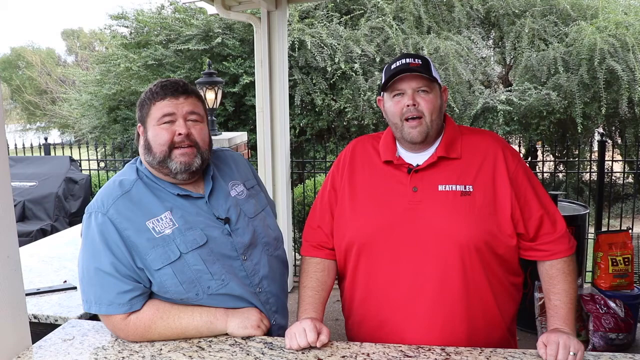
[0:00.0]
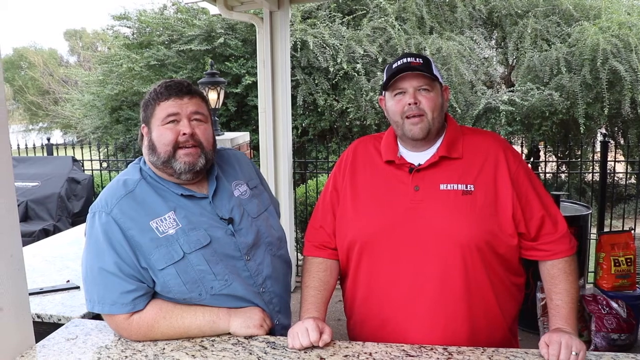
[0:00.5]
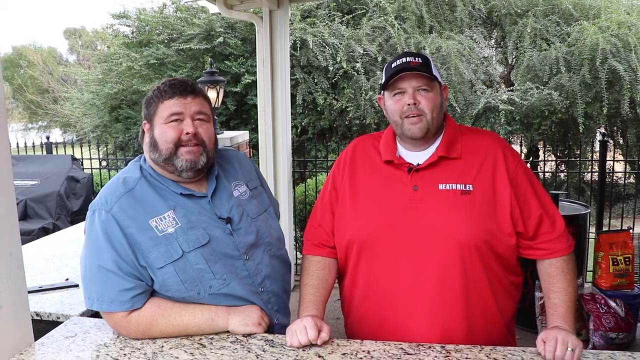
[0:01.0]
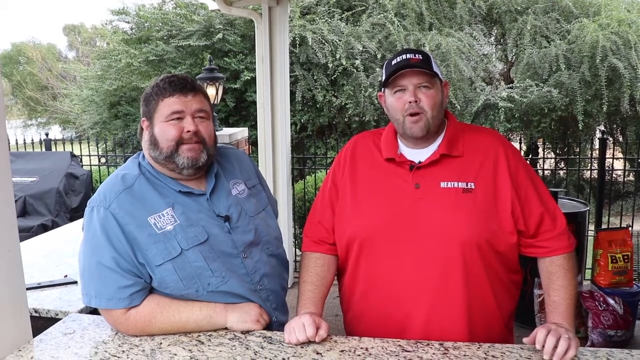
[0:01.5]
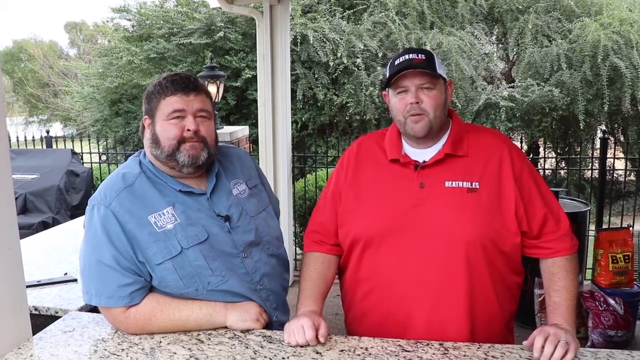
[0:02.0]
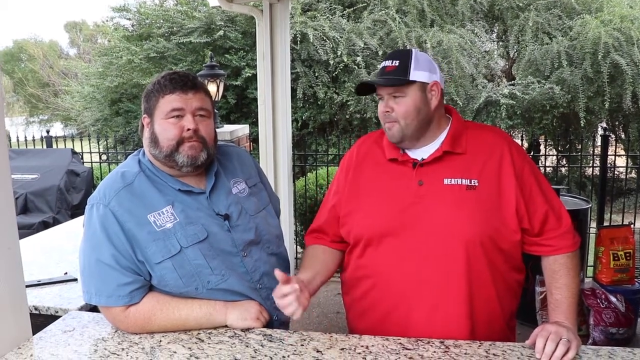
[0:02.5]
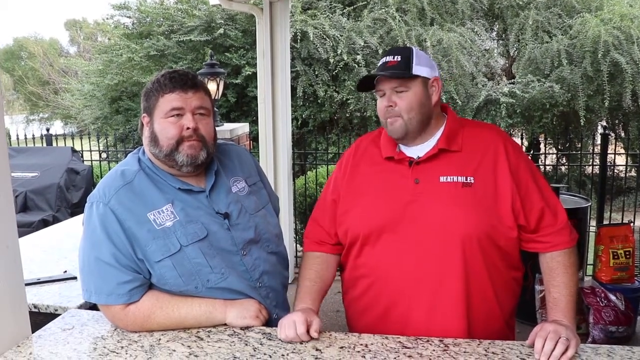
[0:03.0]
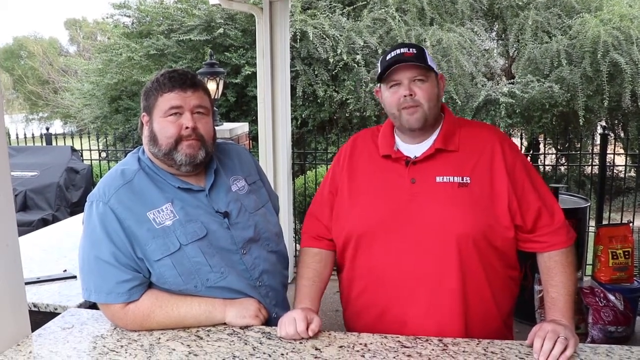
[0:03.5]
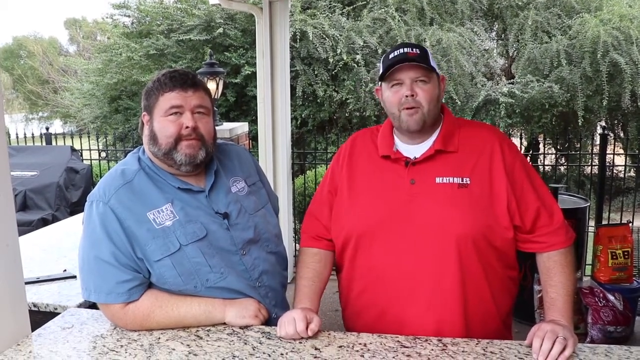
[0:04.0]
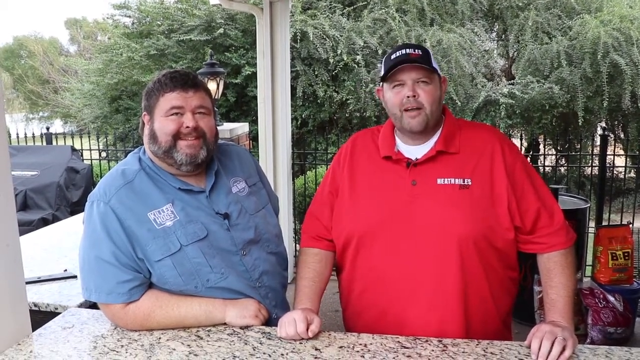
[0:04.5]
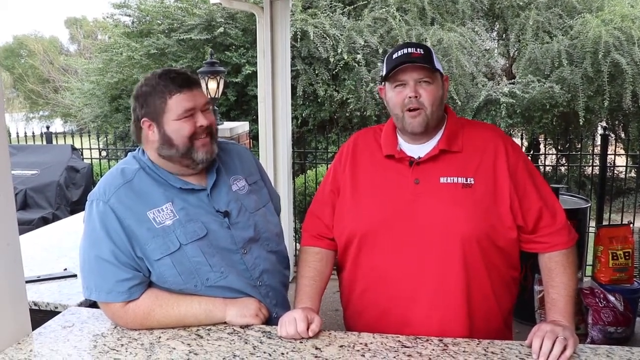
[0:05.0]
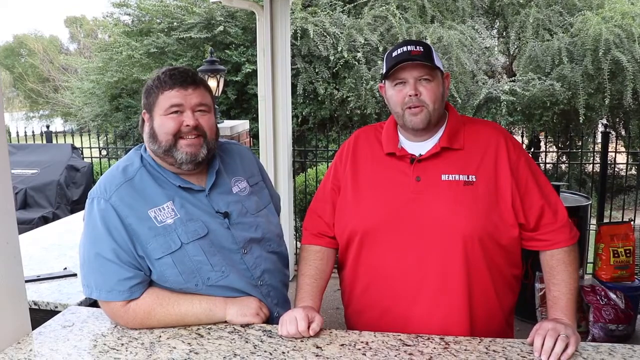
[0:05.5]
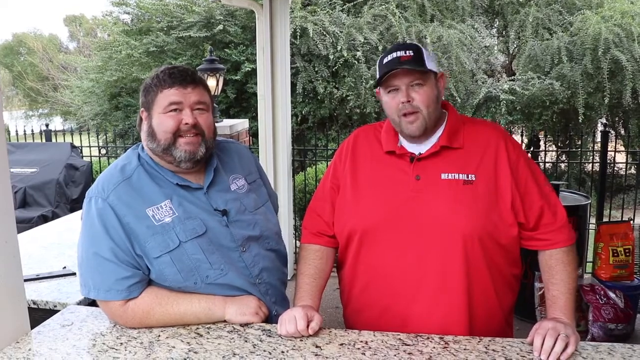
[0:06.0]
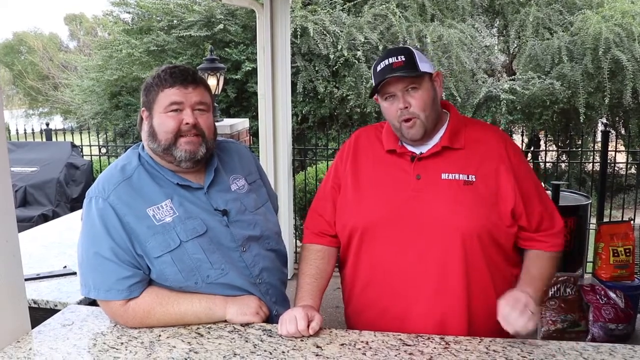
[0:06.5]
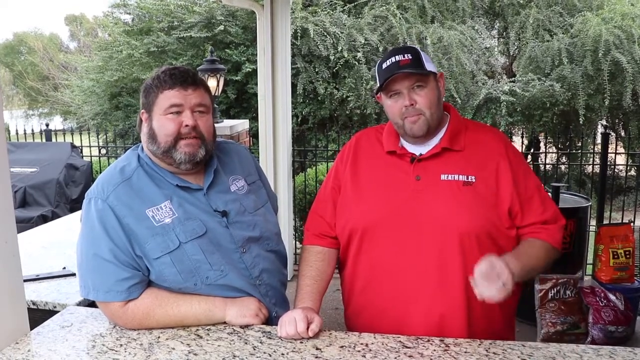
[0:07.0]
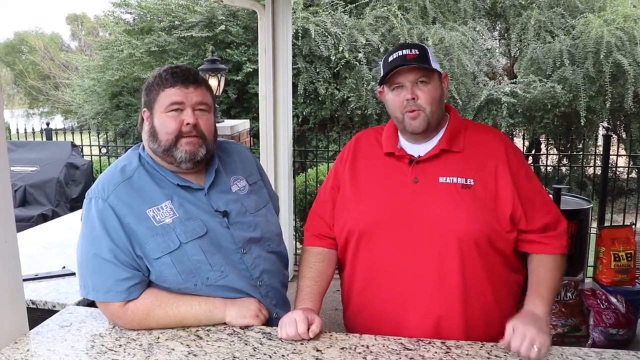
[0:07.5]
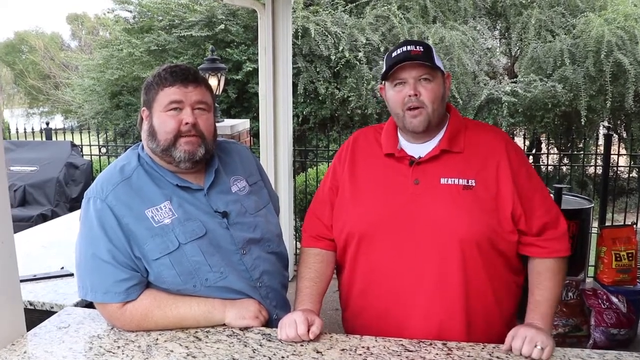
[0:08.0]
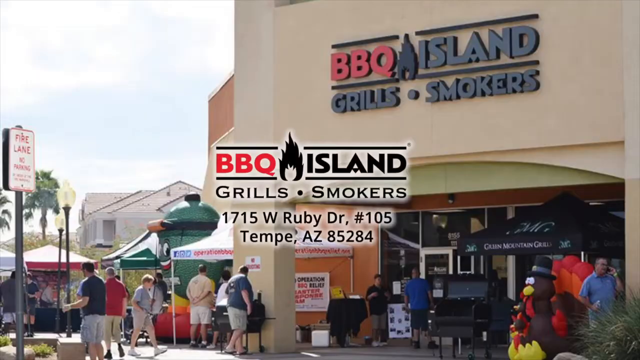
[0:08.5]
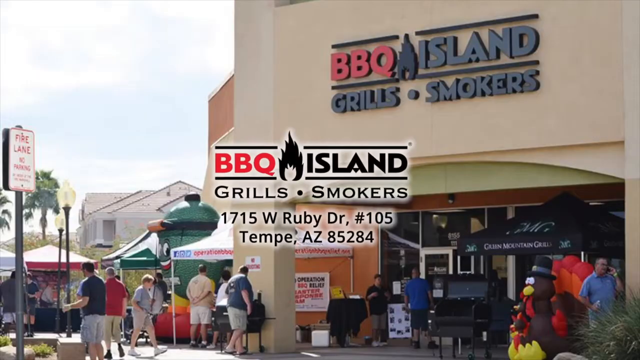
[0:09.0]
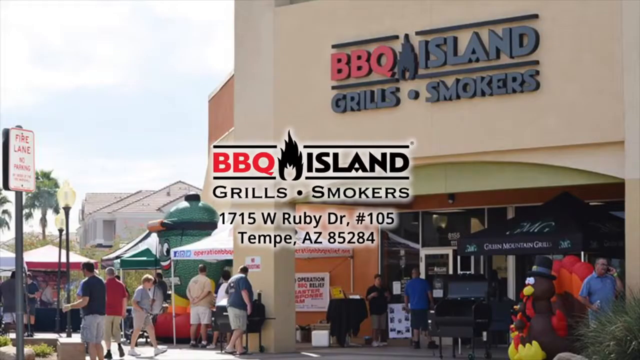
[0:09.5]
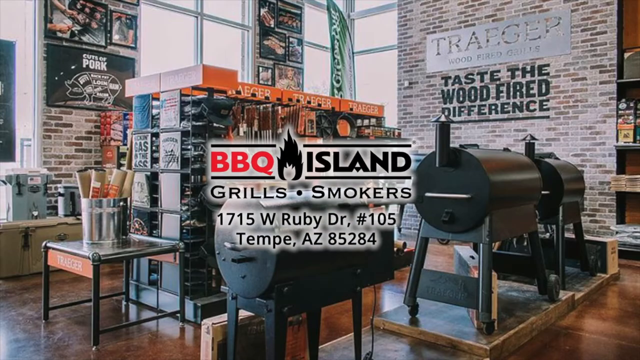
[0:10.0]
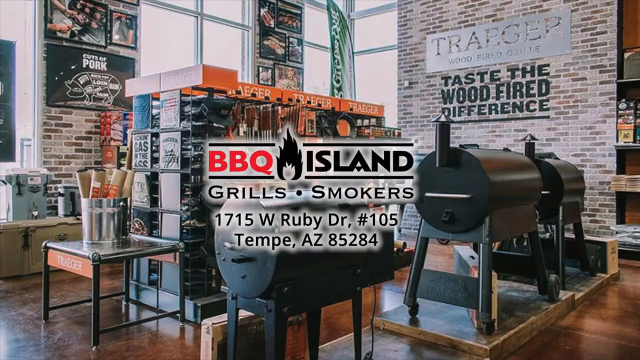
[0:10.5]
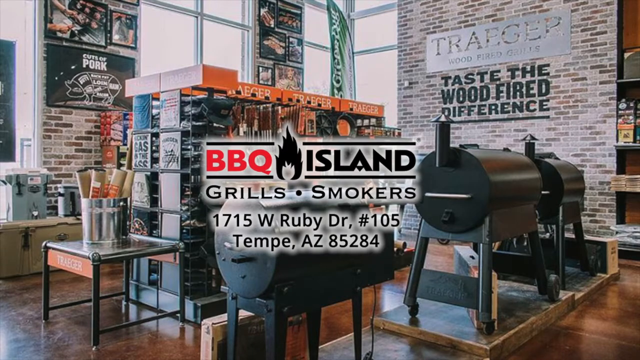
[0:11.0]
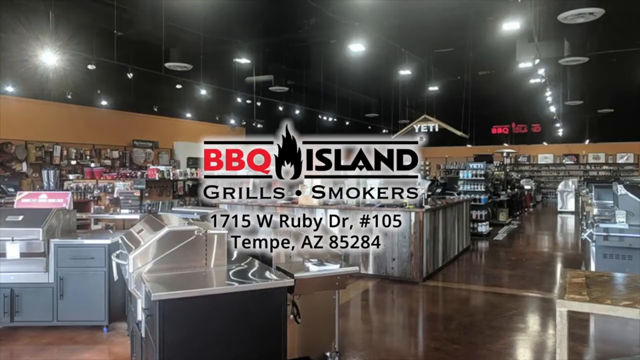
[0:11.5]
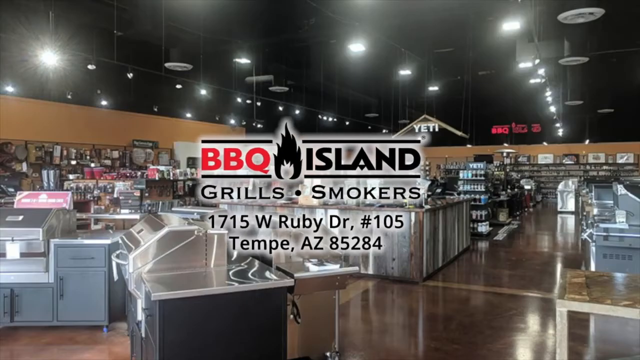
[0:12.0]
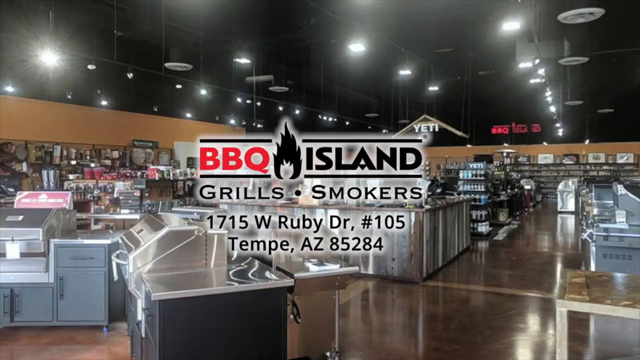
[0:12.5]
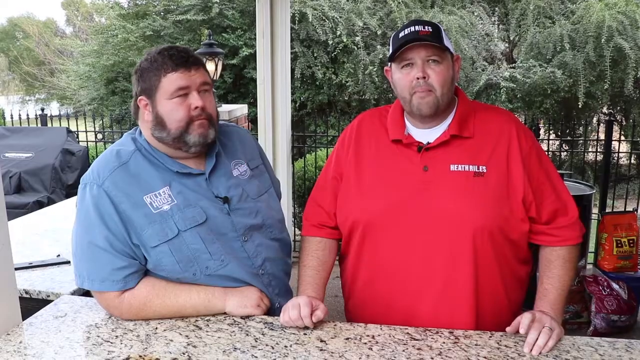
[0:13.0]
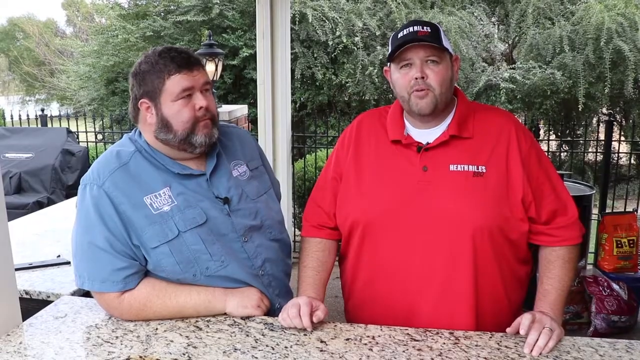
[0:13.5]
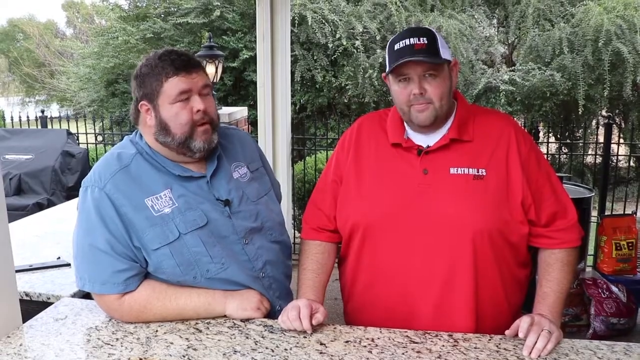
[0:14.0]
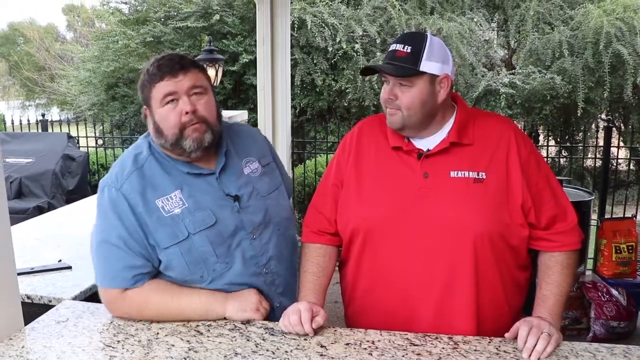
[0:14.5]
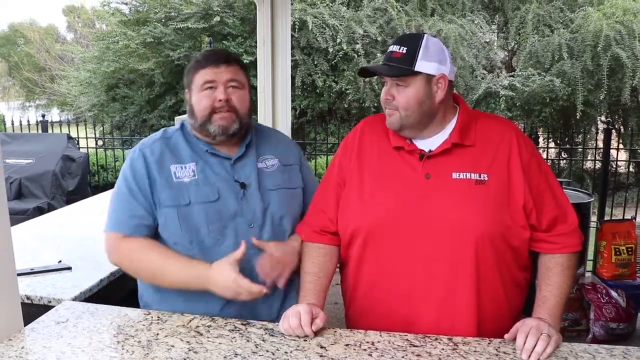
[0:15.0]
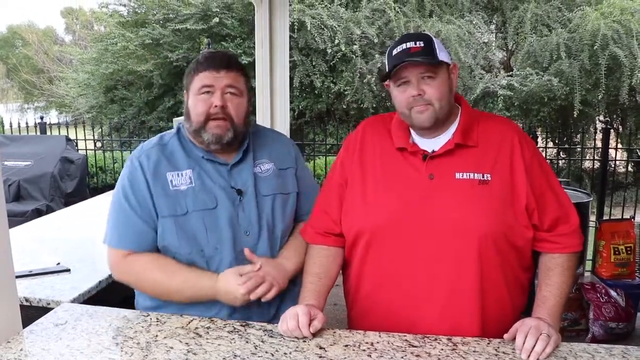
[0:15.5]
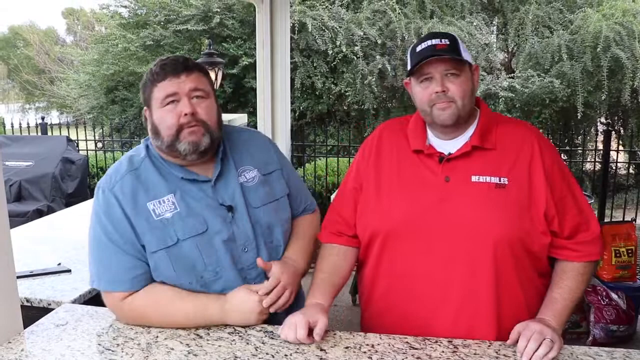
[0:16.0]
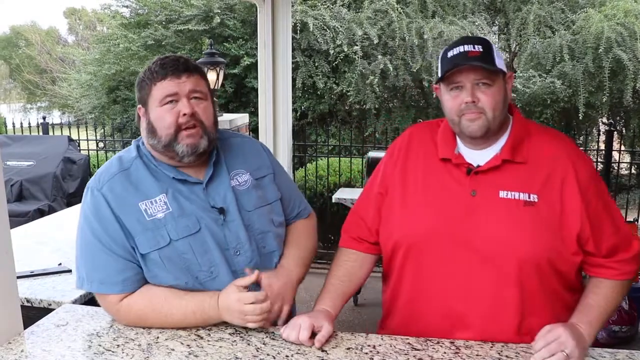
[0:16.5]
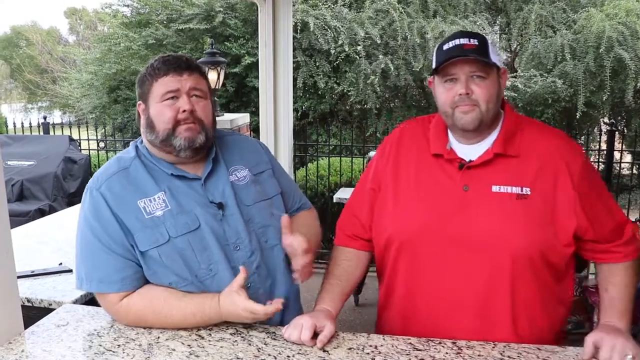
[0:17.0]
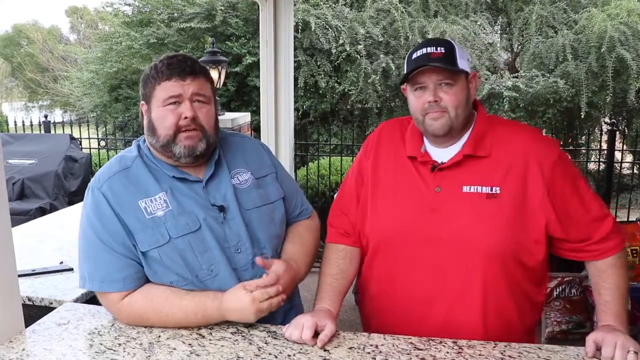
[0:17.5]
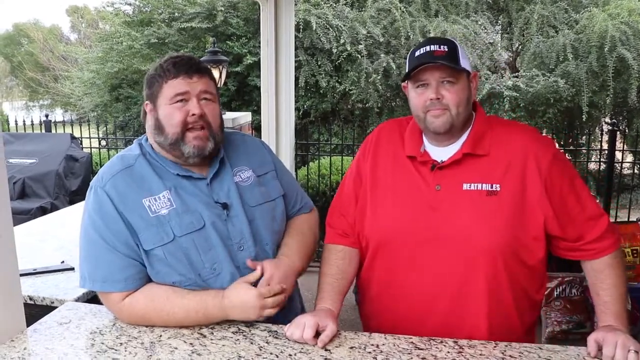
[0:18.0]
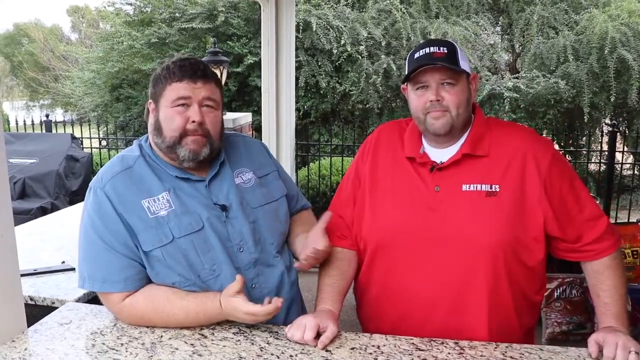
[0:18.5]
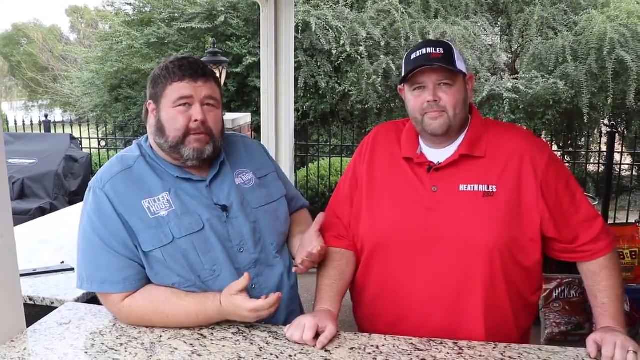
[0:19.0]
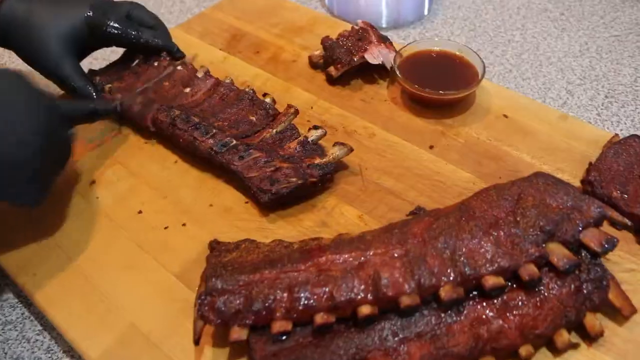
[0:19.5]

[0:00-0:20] Two men who look old stand in front of the camera. One of them has a brown and grey beard and dark brown short hair, and wears a big, light blue collared shirt; the other has no beard. The man on the right wears a red golf shirt with a white shirt underneath and a black, red, and white cap. The two men seem to be conversing about the grills, using various hand gestures as they speak. A sign or logo reading "BBQ Island Grills and Smokers" appears, followed by the address "1715 W Ruby Dr # 105, Tempe, AZ 85284". Images of various grillers and smokers follow, and then a warehouse where grills and smokers are being sold; they look brand new and very shiny. Next, ribs are cut on a wooden board by a person wearing a black glove and using a sharp knife on the juicy-looking brown ribs. A dipping sauce for the ribs is also on the wooden board.